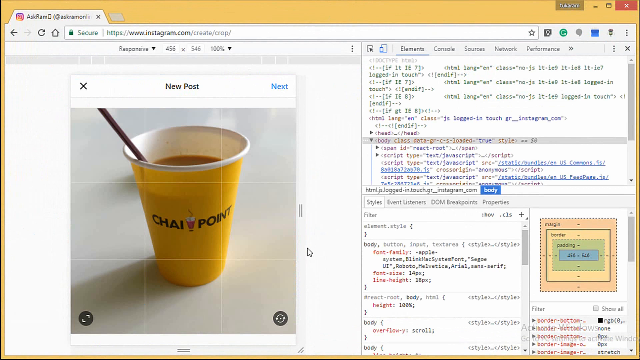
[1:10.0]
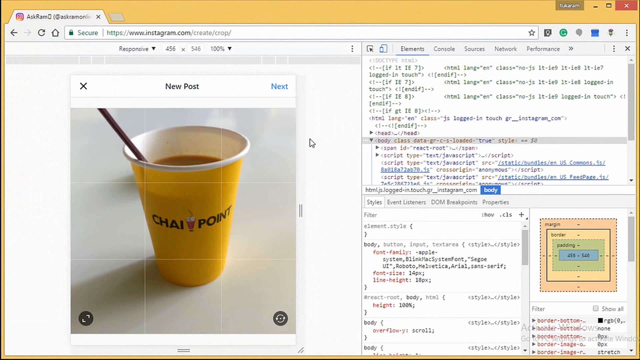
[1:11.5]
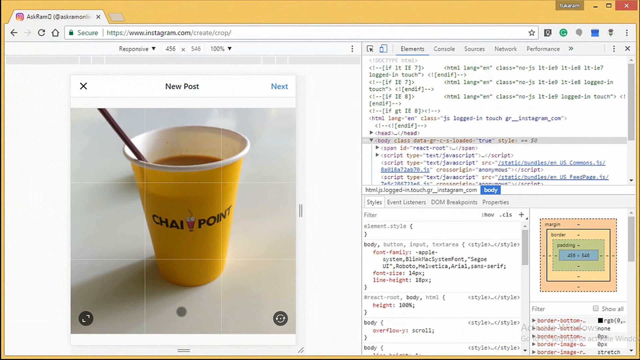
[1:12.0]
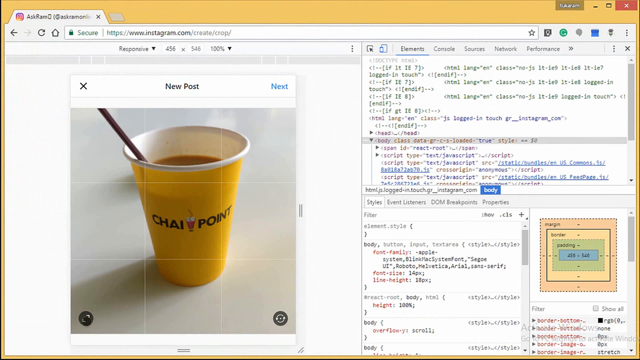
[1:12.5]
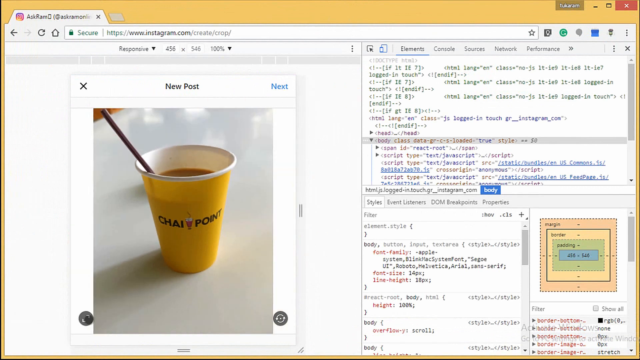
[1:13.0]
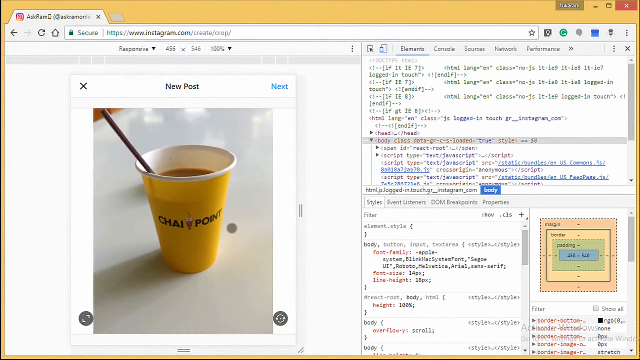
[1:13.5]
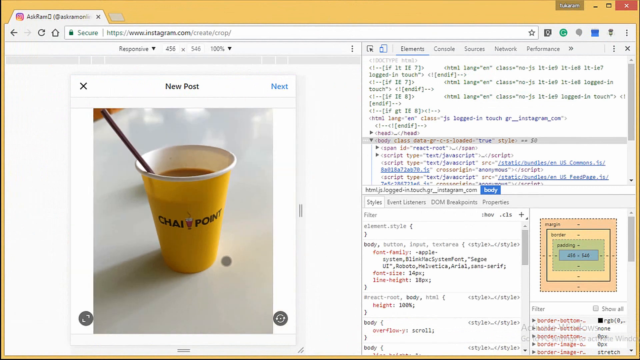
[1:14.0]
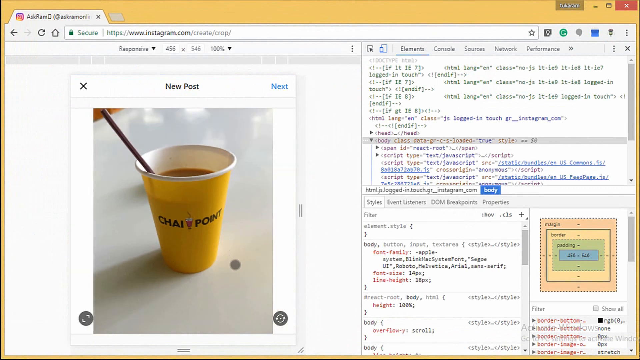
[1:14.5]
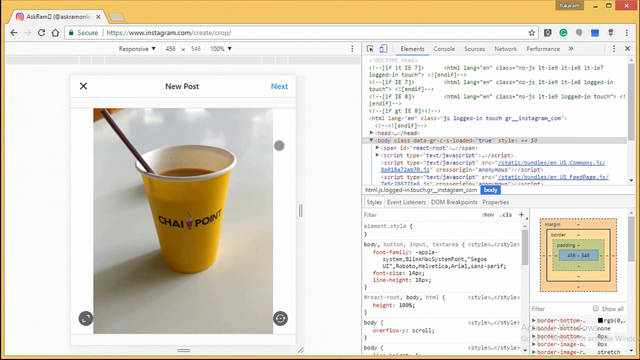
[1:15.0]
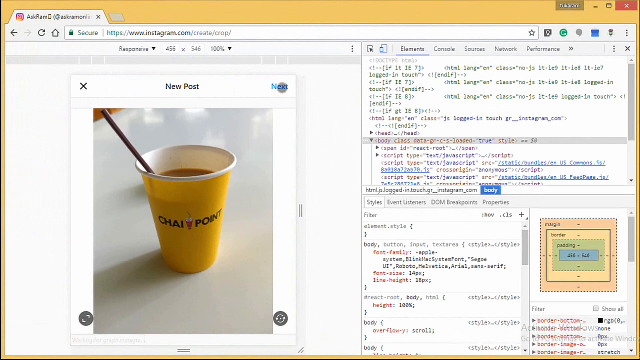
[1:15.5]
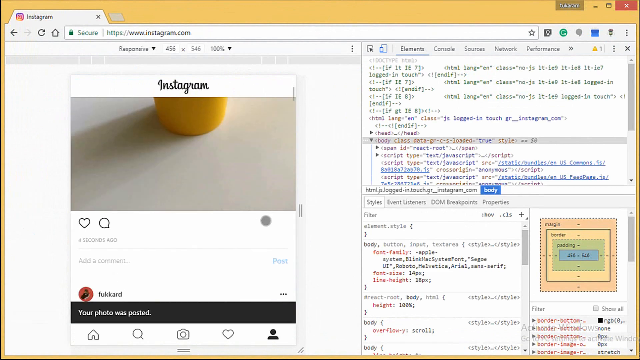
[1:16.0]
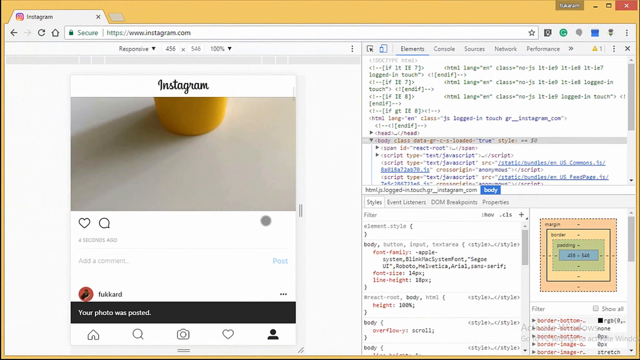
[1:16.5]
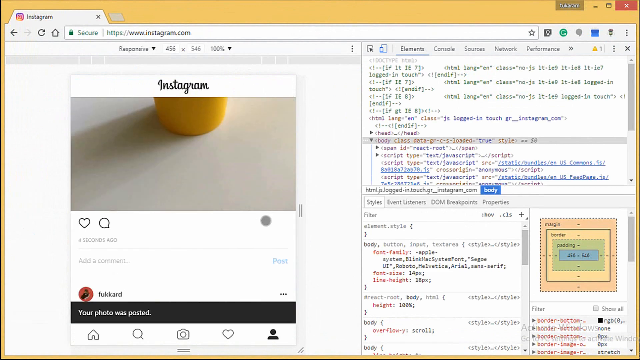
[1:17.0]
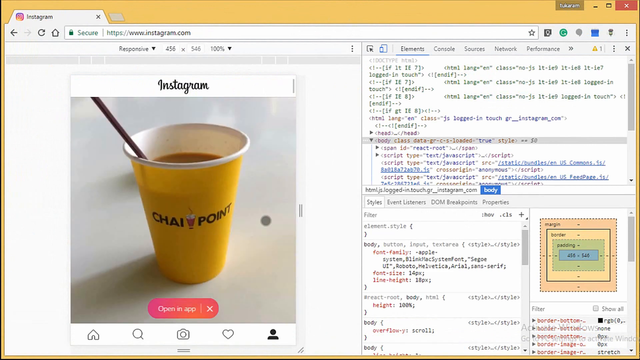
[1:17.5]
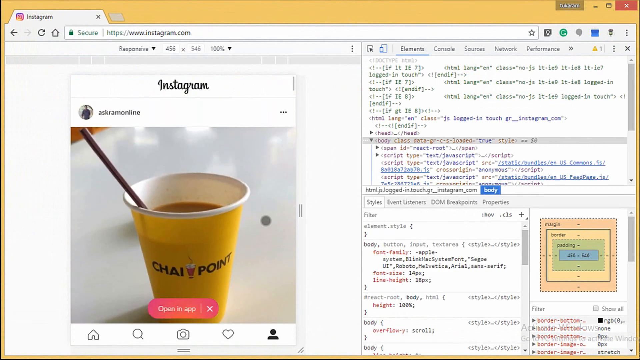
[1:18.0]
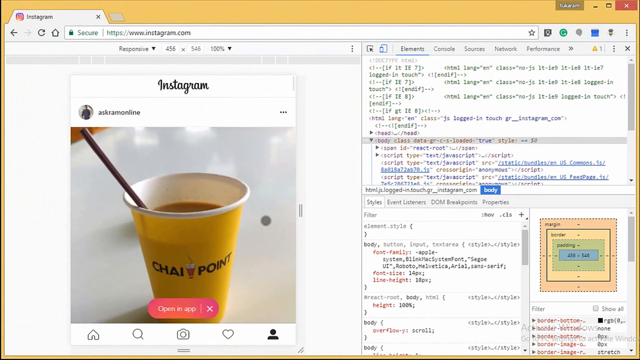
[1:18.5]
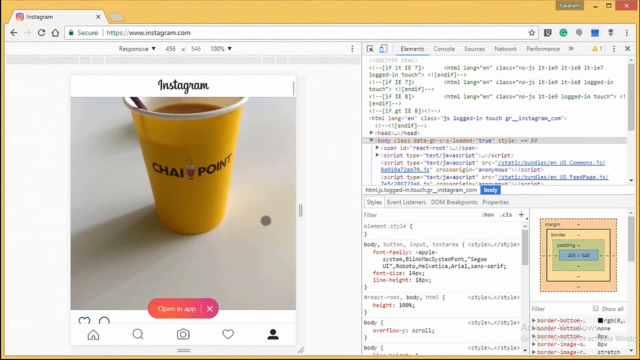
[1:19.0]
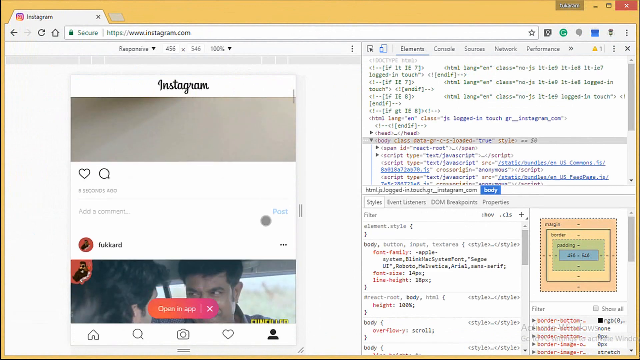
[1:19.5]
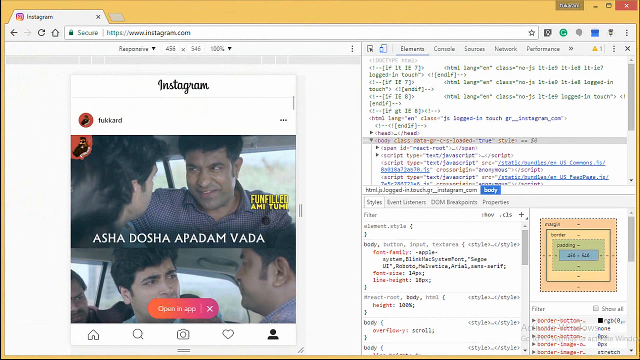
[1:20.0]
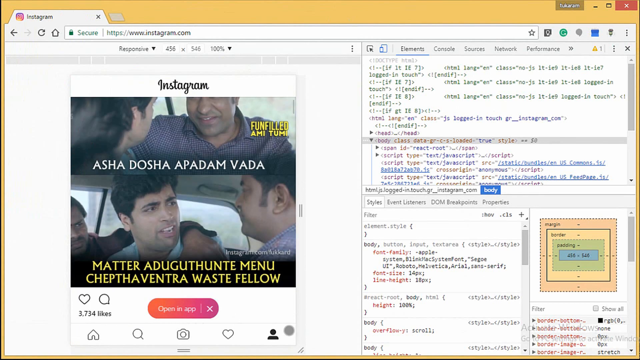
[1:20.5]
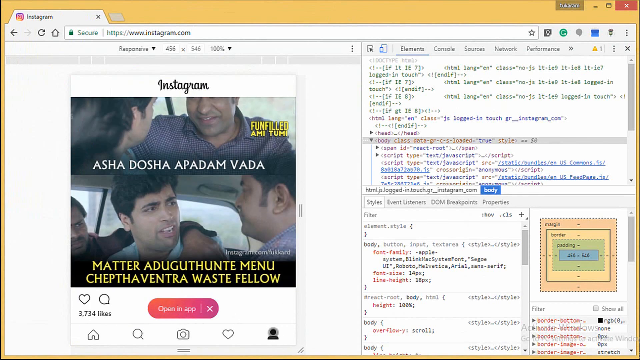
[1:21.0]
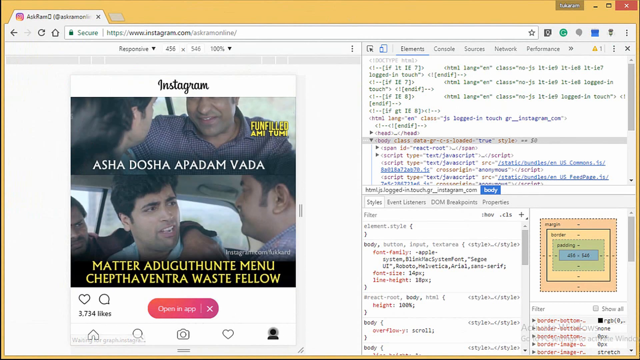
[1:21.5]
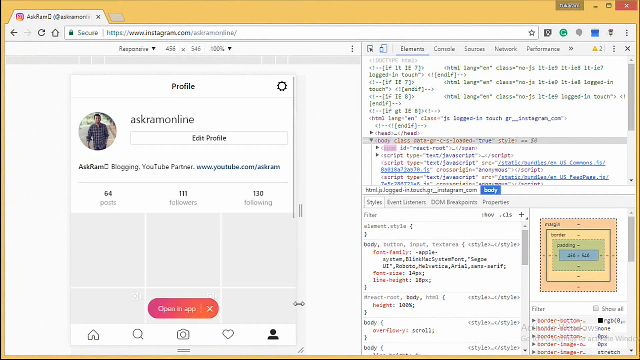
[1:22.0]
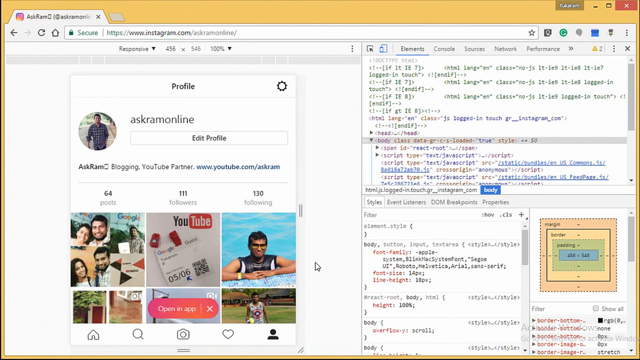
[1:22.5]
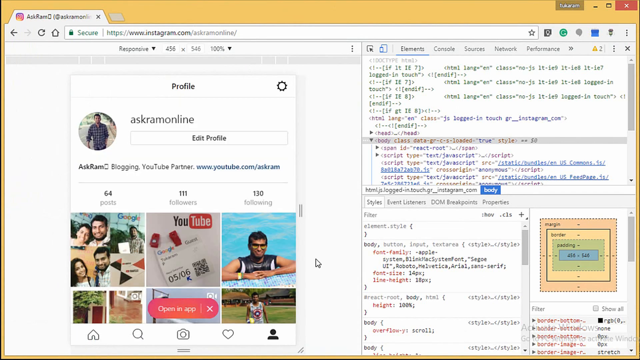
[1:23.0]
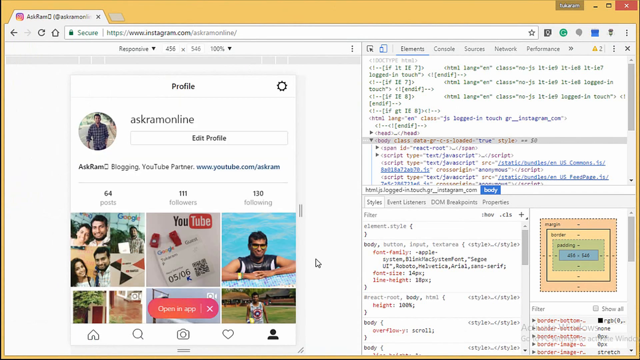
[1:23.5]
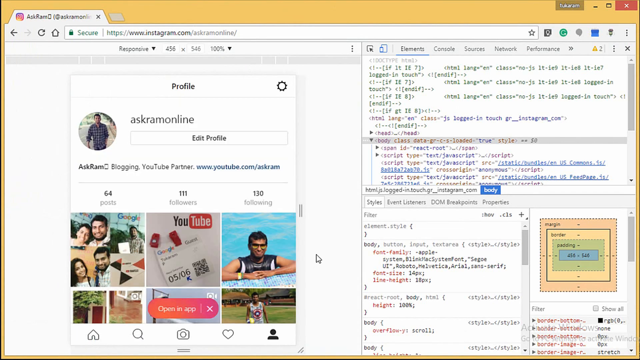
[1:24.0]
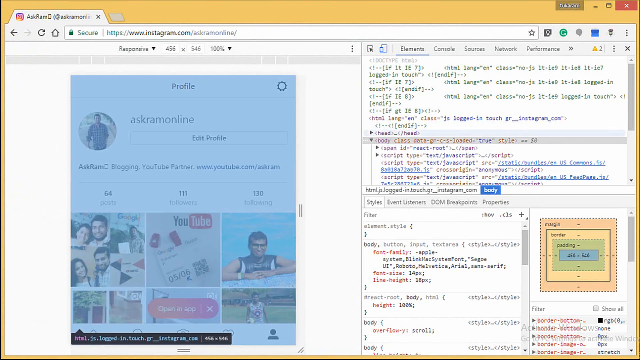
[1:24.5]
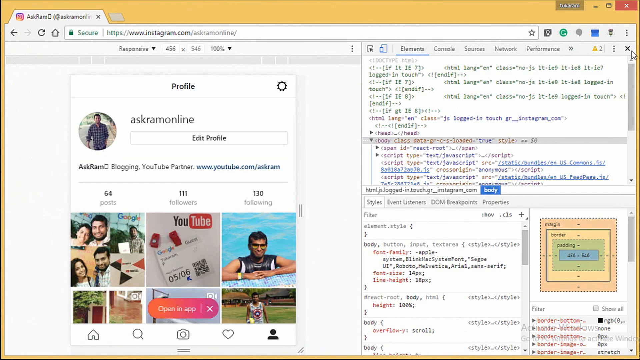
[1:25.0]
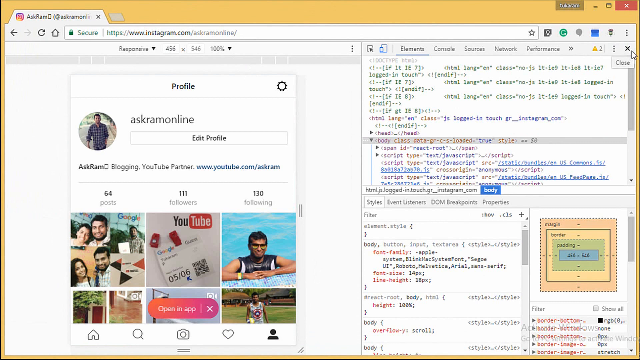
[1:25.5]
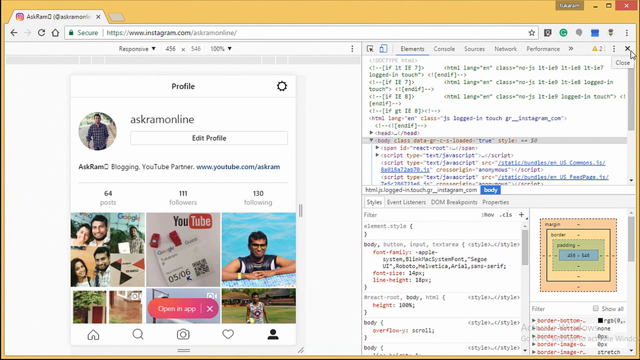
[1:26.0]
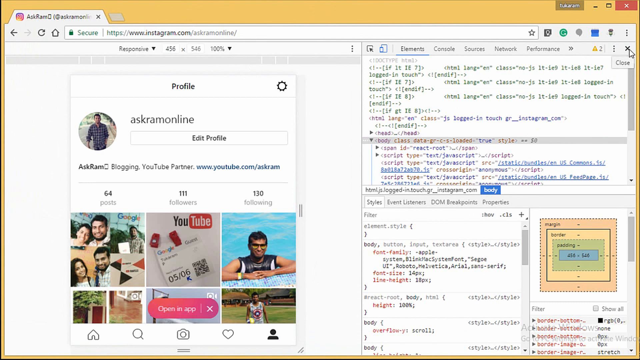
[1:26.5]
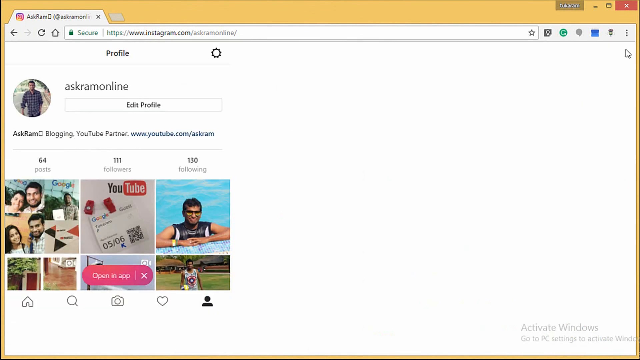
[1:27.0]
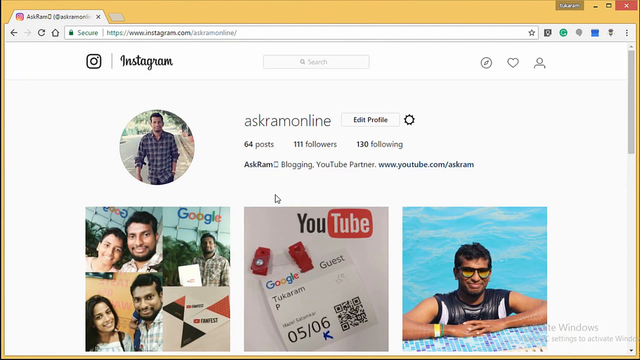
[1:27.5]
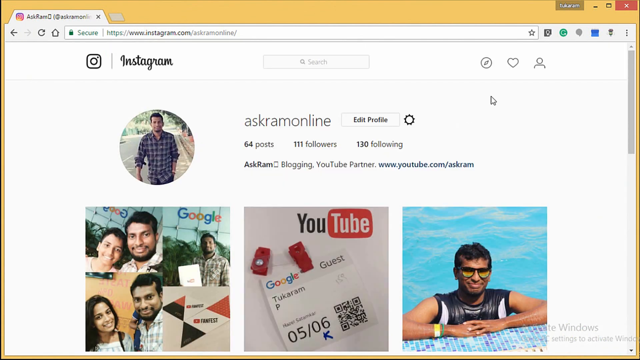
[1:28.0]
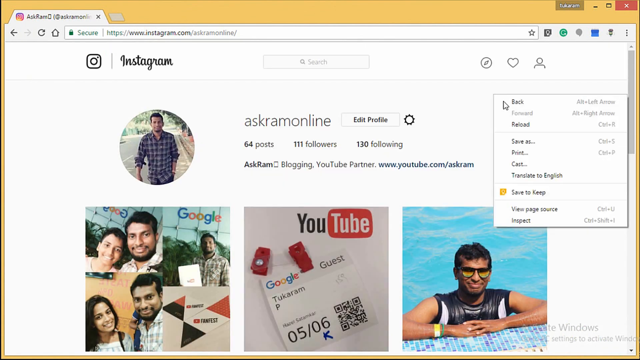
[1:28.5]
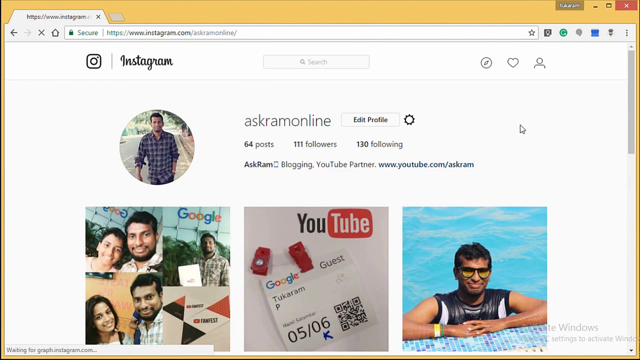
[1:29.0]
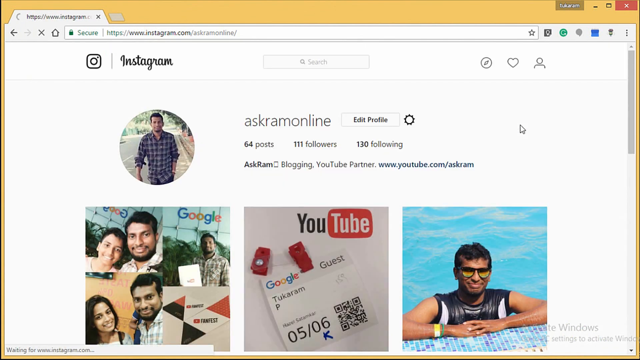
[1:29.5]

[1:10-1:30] He keeps scrolling. There are grid lines on the yellow cup, indicating he is cropping his new post. He scrolls down to more pictures of himself. He closes the right panel, which holds his Python code, apparently his programming, where the words "elements, scores, network" are written, then opens it again. Scrolling down, he reaches a picture of several men who seem to be in a car having a friendly argument, with puzzled faces. He scrolls back to the new post with the yellow cup, refreshes the page, and closes and reopens the right panel with his programming. His pointer is a grey dot, and he clicks next.